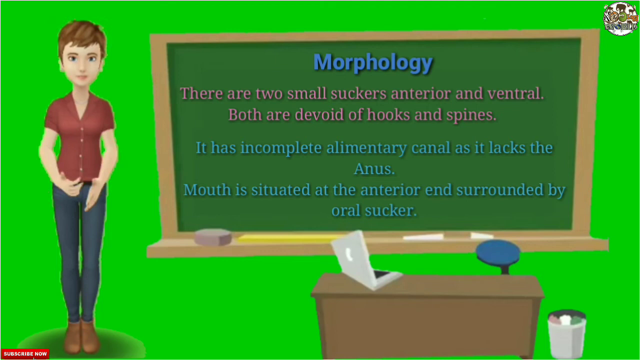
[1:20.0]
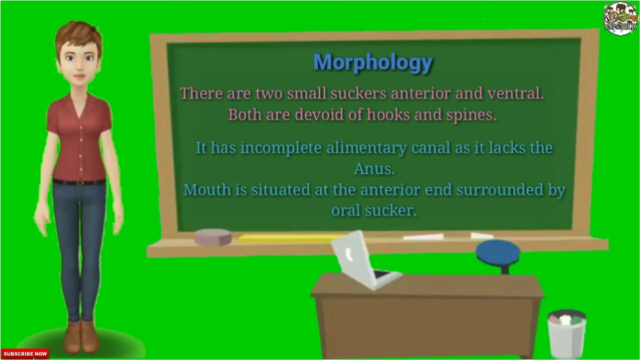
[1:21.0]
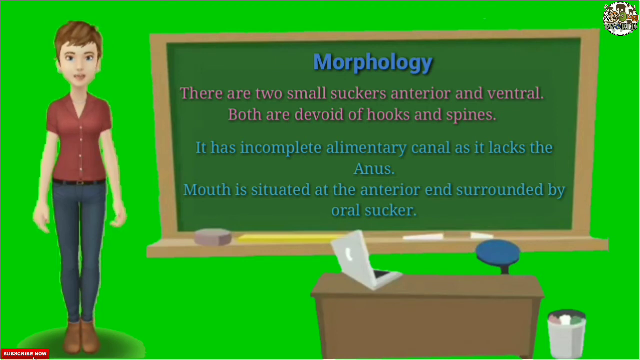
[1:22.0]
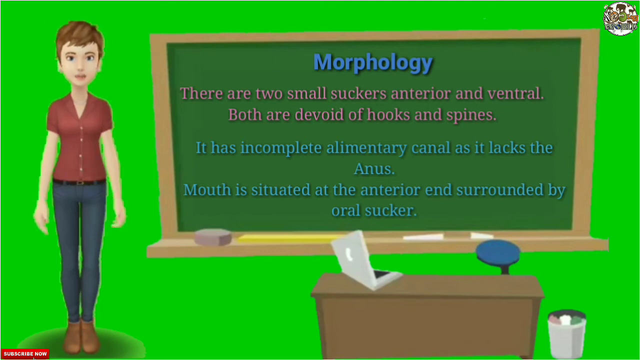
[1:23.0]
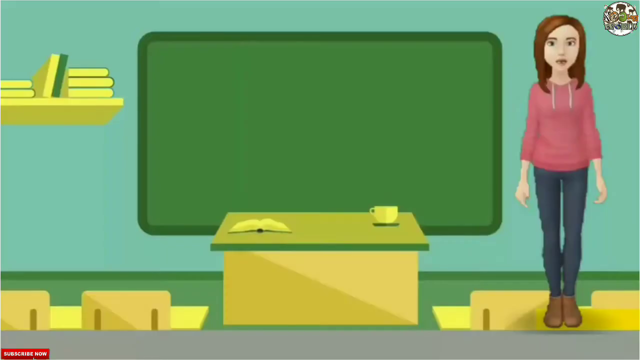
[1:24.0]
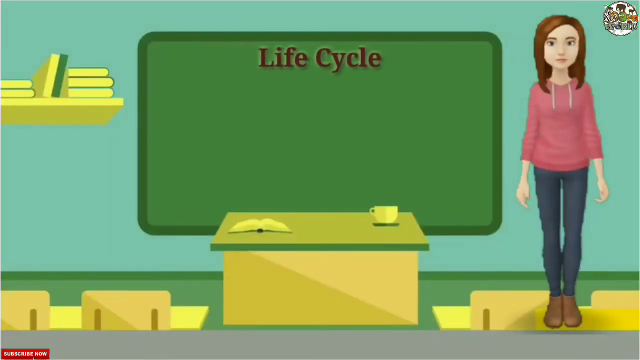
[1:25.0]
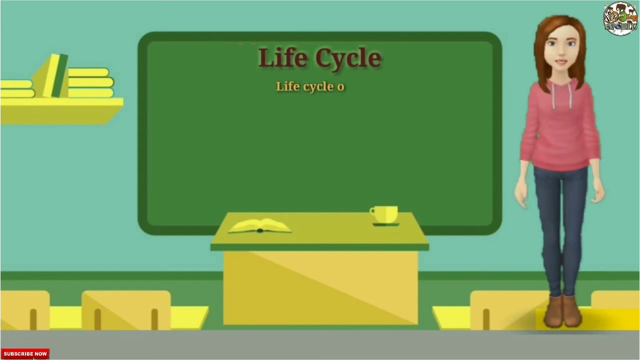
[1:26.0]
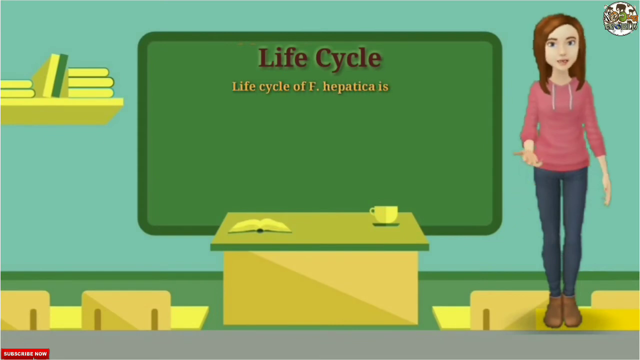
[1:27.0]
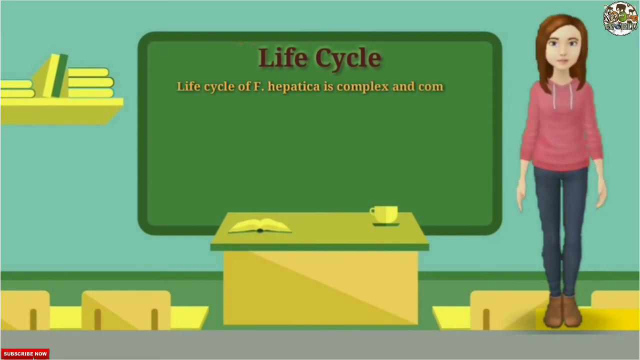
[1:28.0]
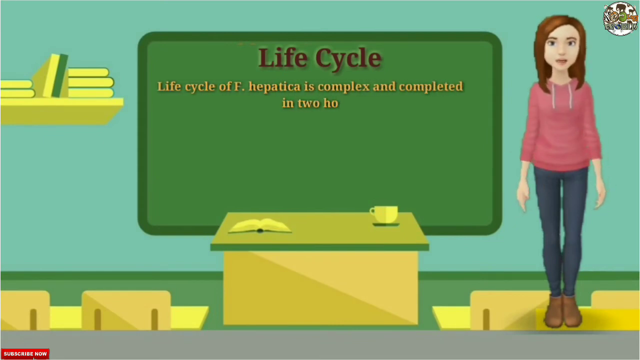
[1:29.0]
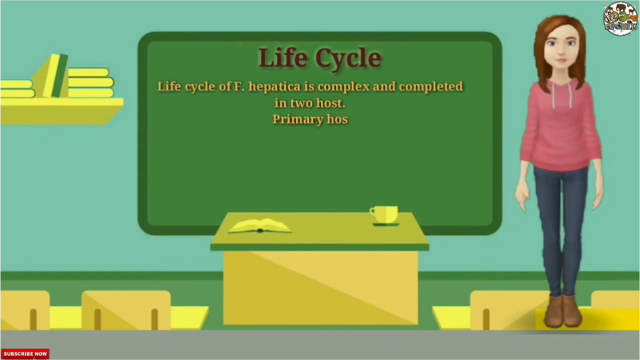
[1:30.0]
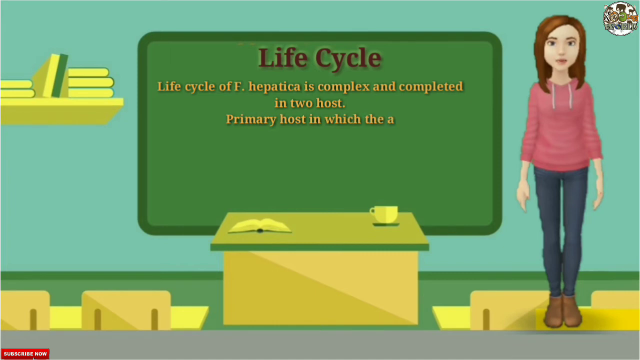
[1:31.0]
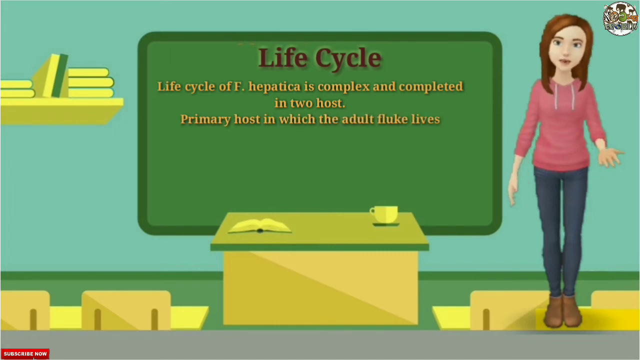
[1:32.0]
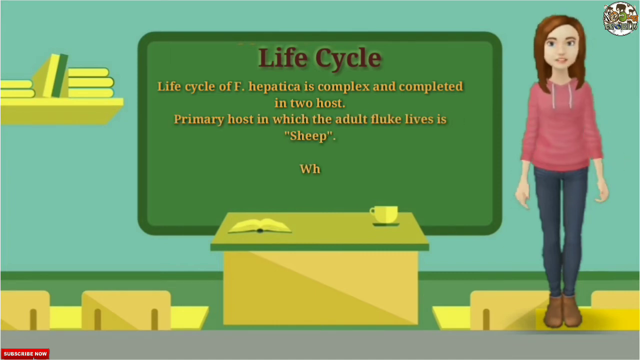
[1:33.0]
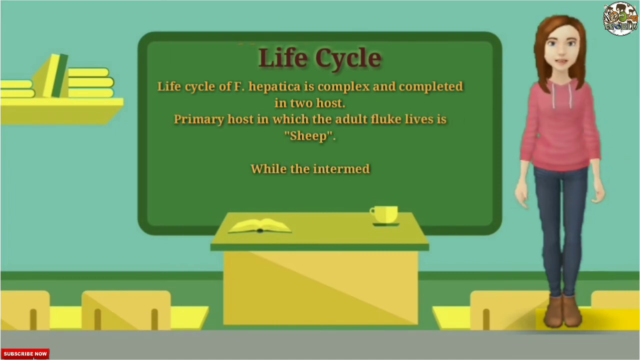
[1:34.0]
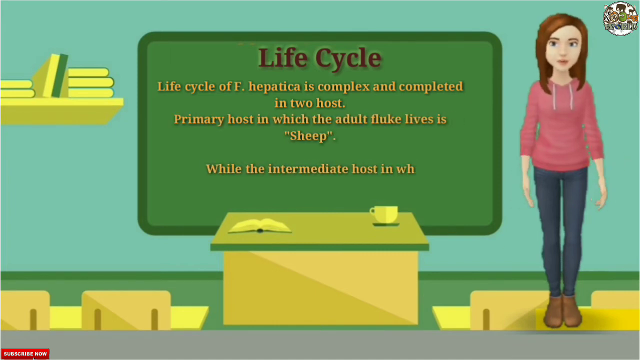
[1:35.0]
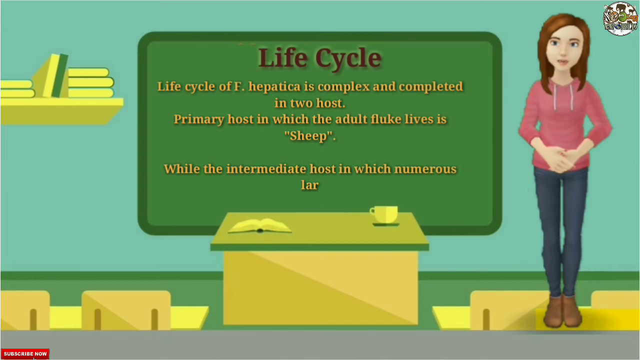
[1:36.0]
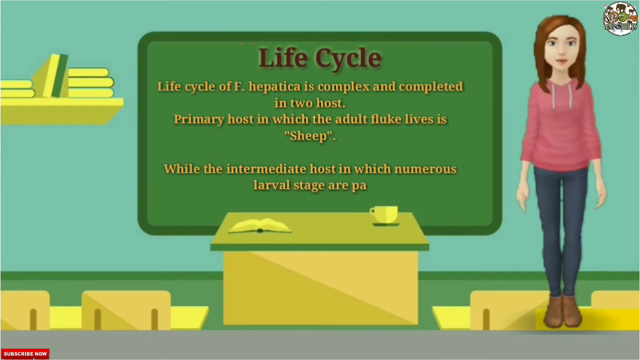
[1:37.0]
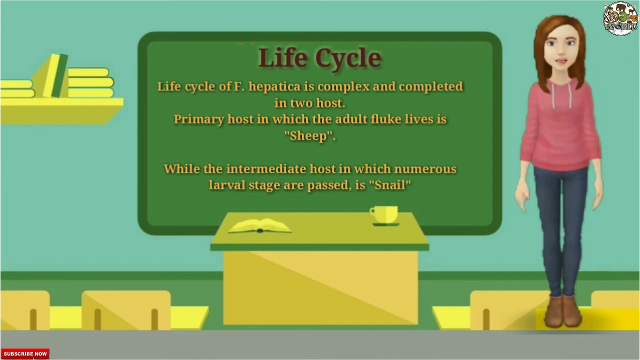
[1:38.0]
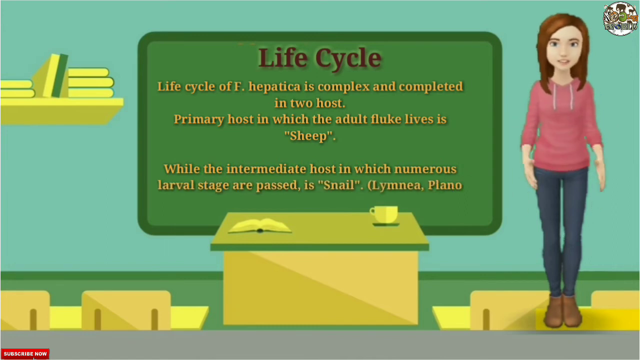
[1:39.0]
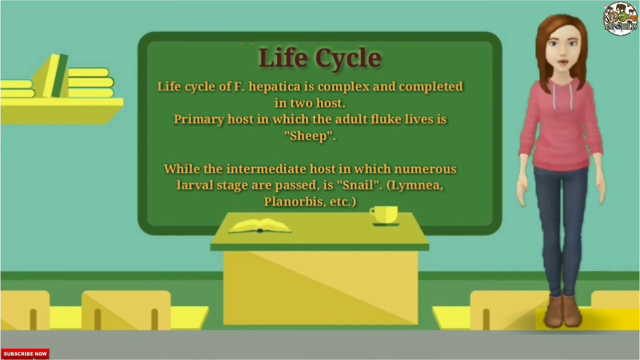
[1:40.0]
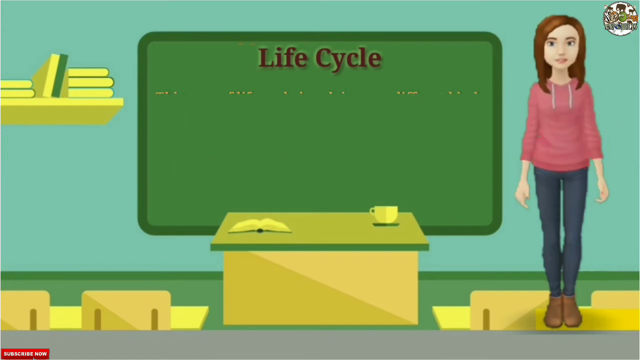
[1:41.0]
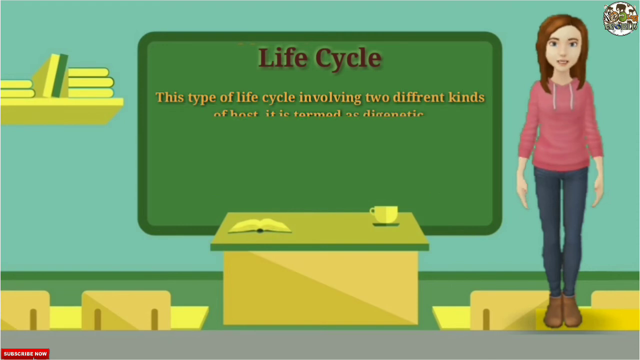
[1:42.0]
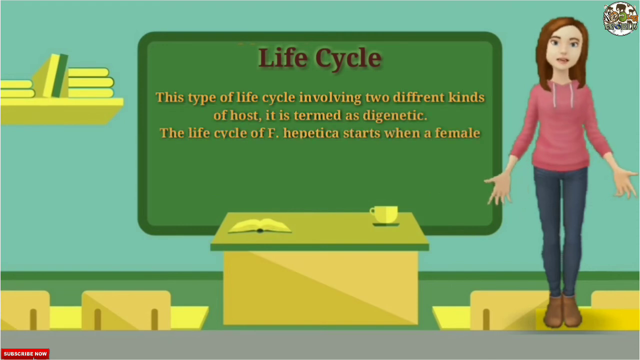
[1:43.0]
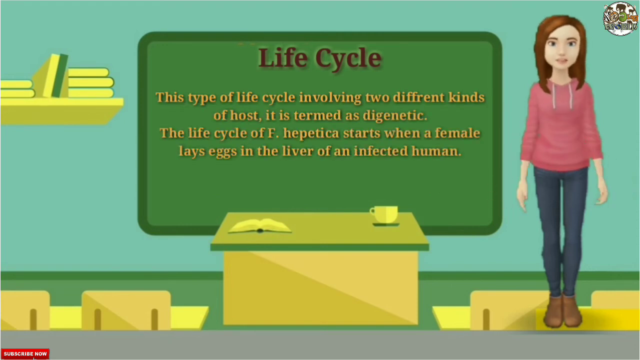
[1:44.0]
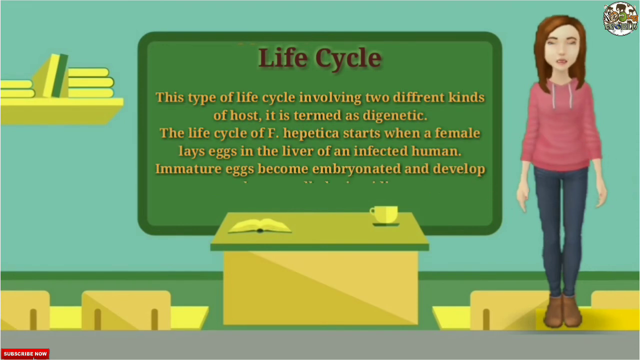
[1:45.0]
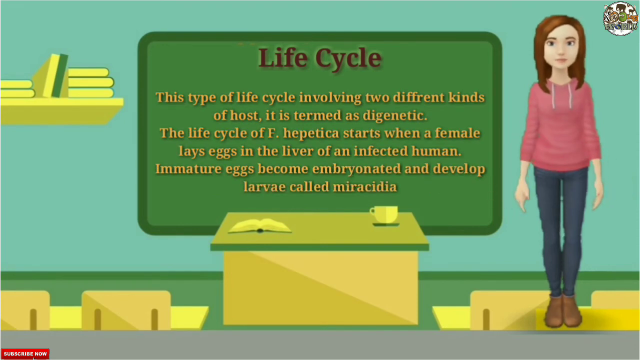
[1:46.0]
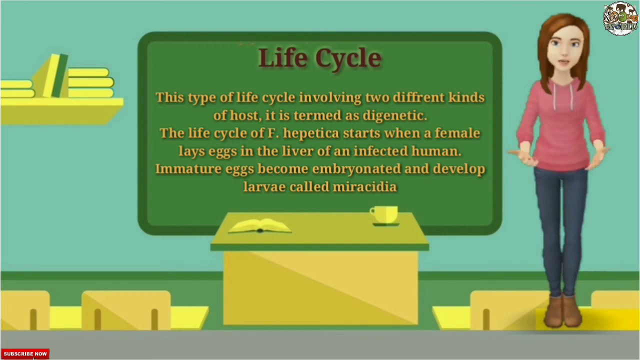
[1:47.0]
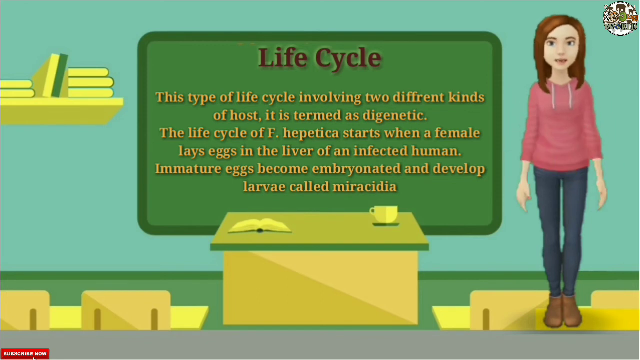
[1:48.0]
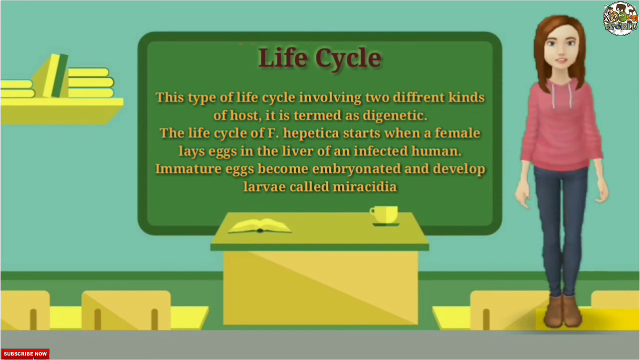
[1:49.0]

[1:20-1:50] The woman is still shown presenting the morphology briefly, then the scene switches to a younger teacher with long brown hair and a pink hoodie, who begins presenting the life cycle of F. hepatica. She is on the right side of the blackboard, and a table in front of the blackboard, which does not obstruct the text, has a coffee cup and an open book on it. She explains as text is generated on the blackboard in yellow: "Life cycle of F. Hepatica is complex and completed in two hosts. Primary host in which the adult fluke lives is sheep while the intermediate host in which numerous larval stages are passed is snail." The blackboard is then cleared, the life cycle heading remains, and more text appears: "This type of life cycle involving two different kinds of host it is termed as digenetic. The life cycle of F. Hepatica starts when a female lays eggs in the liver of an infected human. Immature eggs become embryonated and develop larvae called myrcidia."